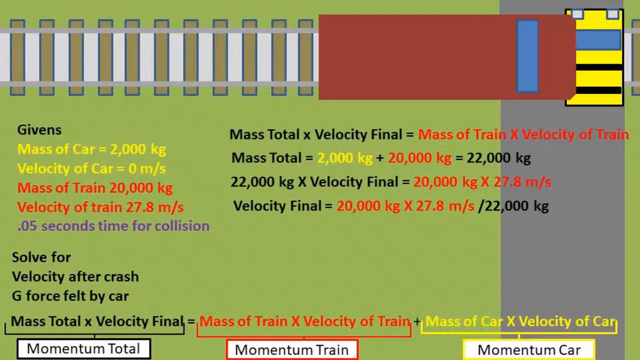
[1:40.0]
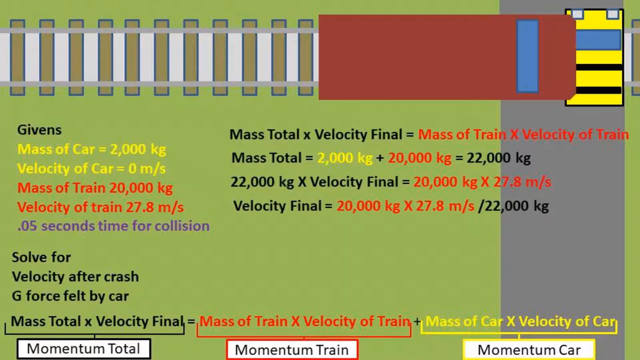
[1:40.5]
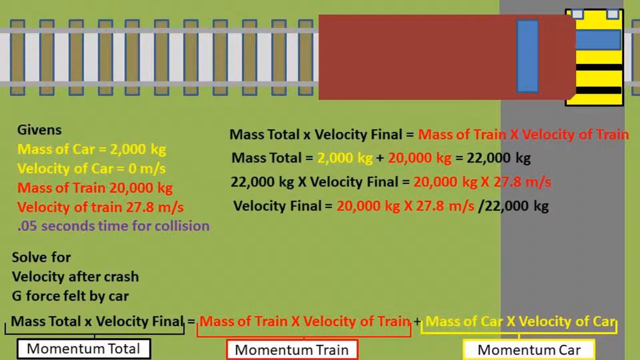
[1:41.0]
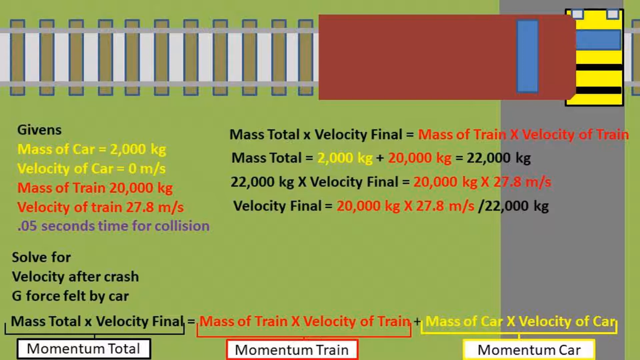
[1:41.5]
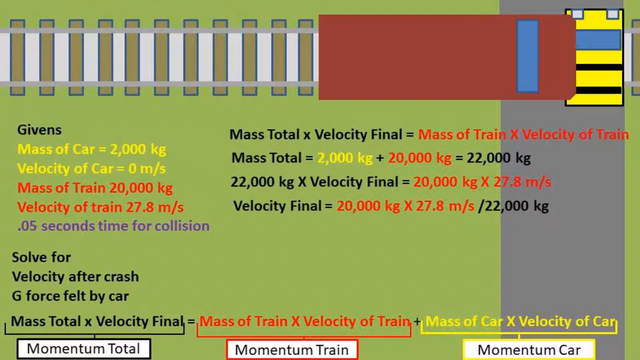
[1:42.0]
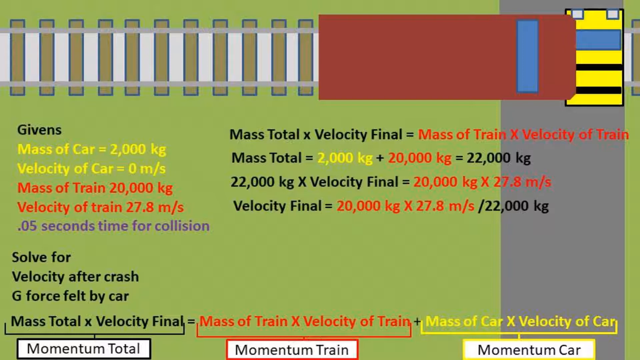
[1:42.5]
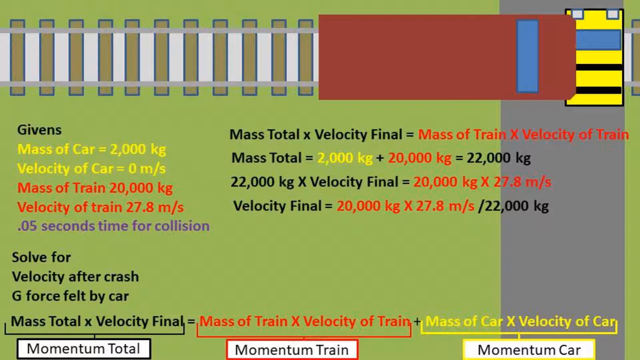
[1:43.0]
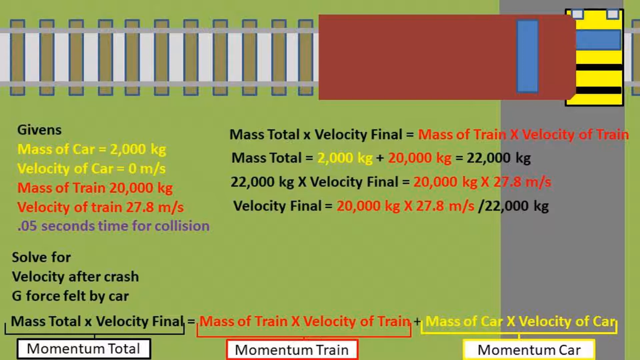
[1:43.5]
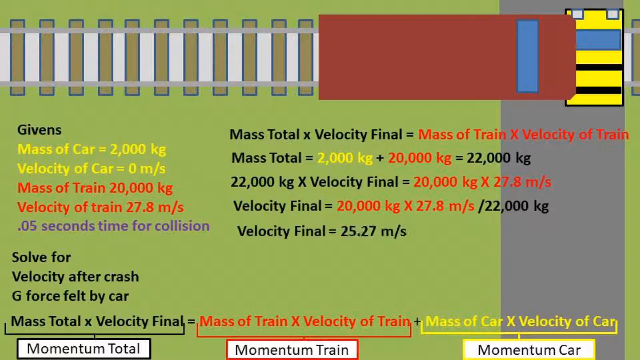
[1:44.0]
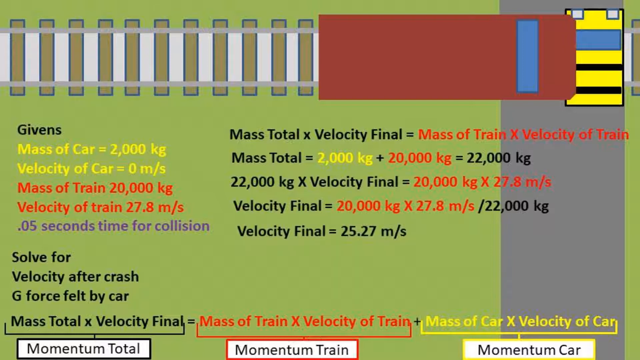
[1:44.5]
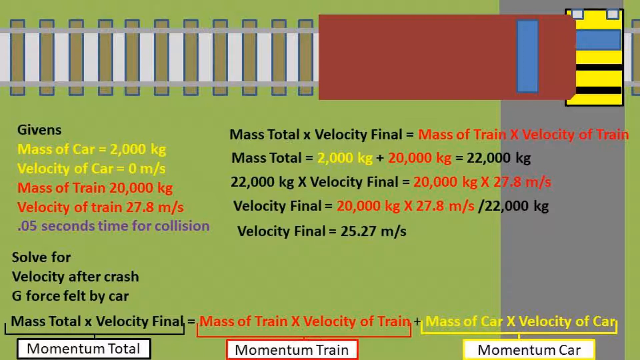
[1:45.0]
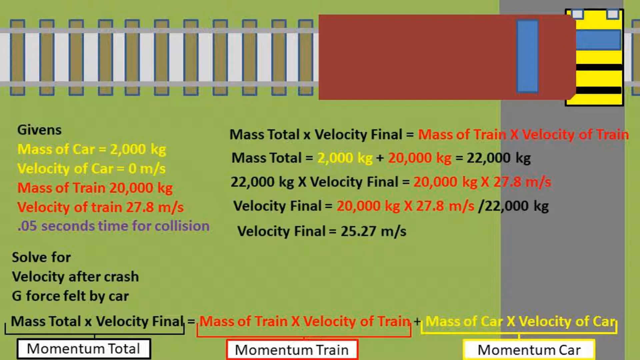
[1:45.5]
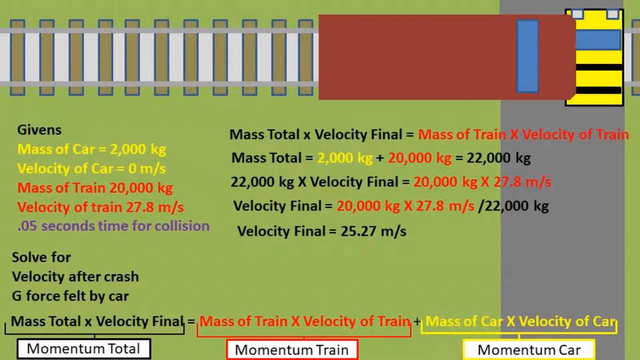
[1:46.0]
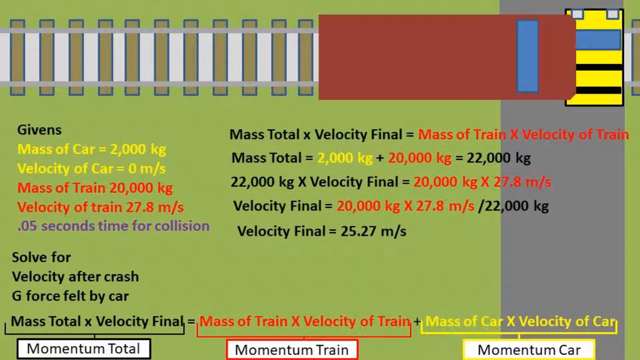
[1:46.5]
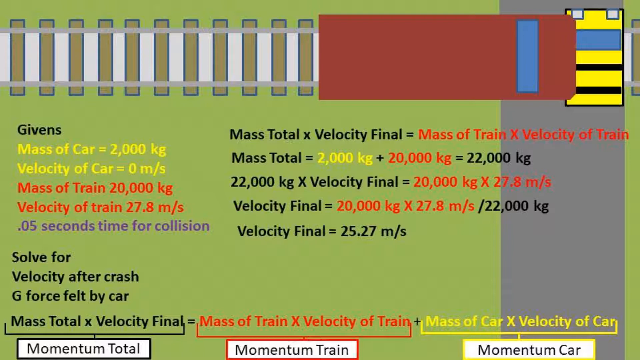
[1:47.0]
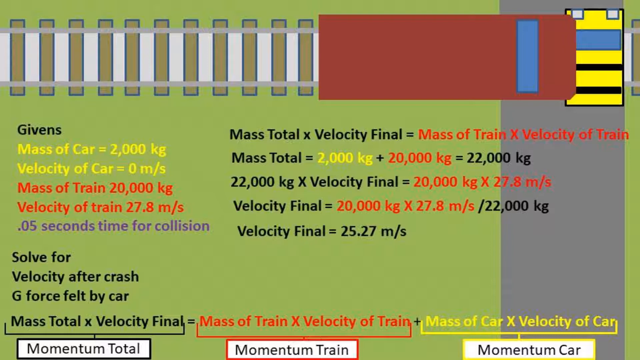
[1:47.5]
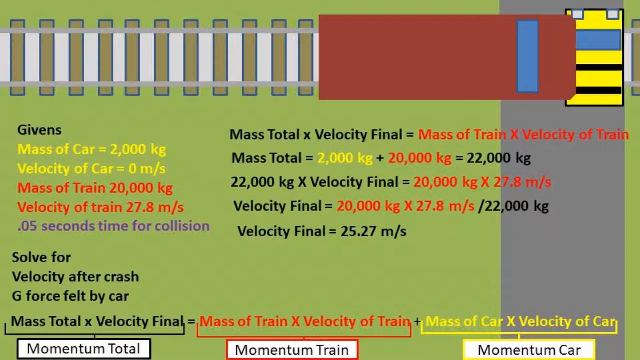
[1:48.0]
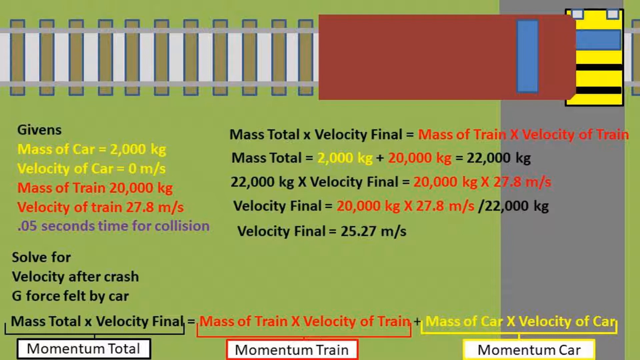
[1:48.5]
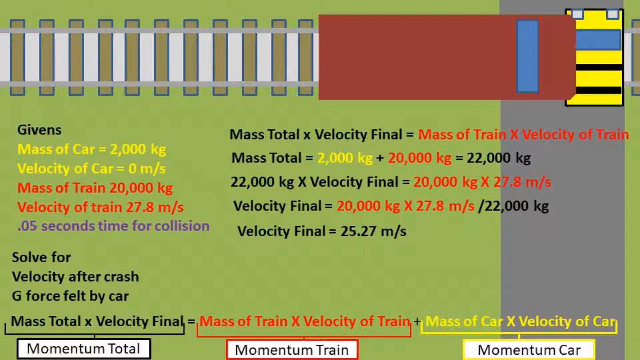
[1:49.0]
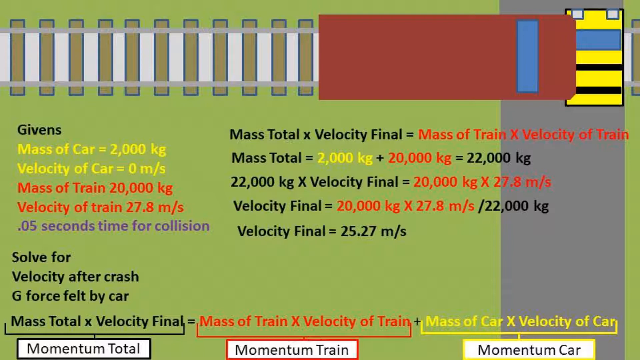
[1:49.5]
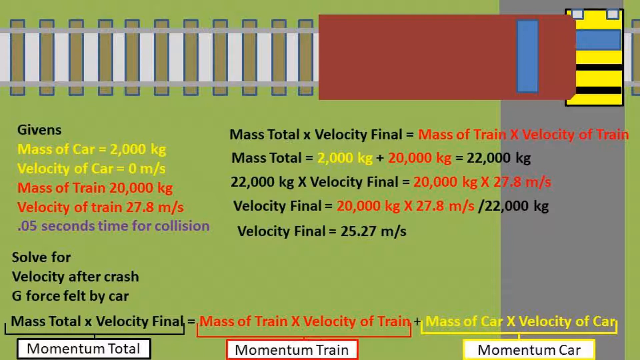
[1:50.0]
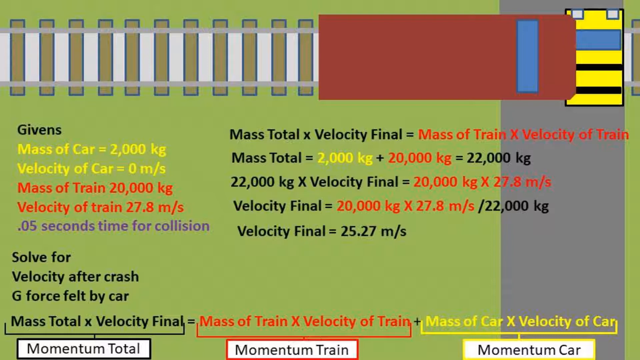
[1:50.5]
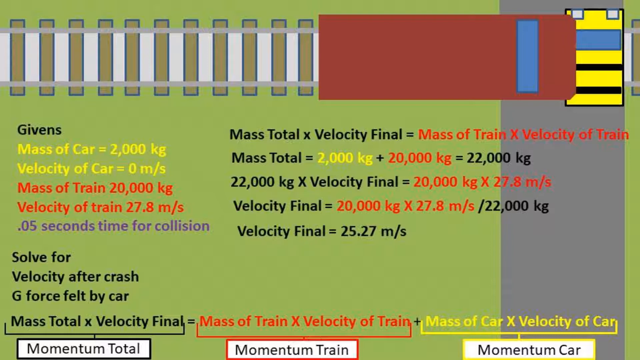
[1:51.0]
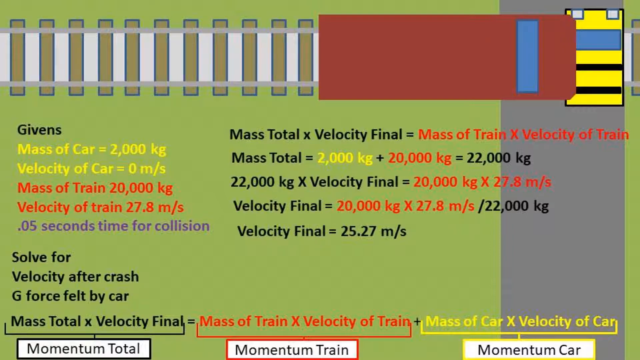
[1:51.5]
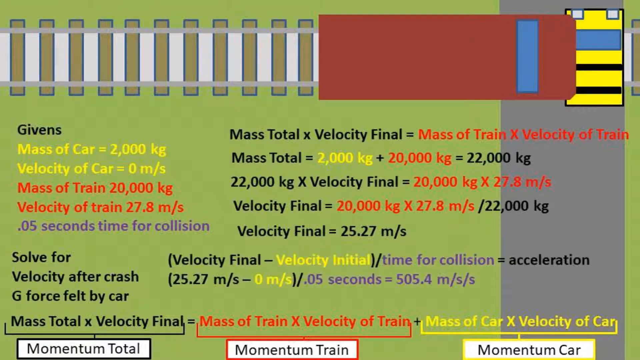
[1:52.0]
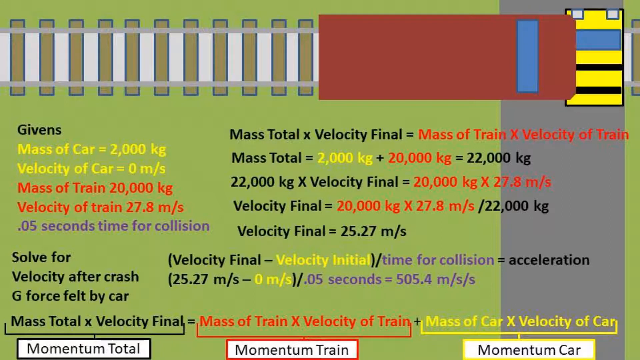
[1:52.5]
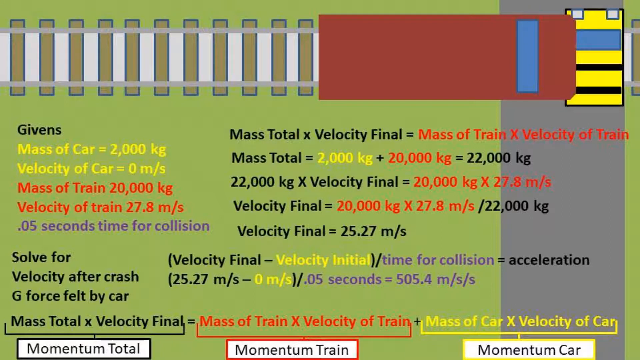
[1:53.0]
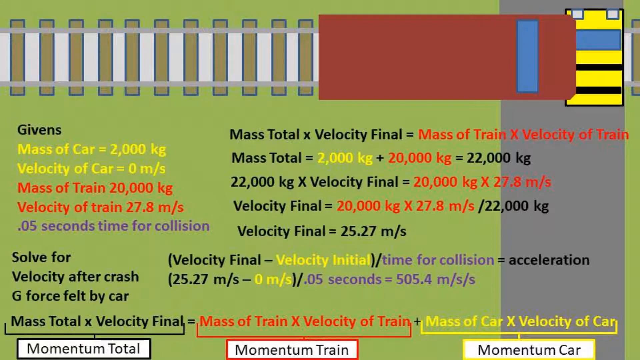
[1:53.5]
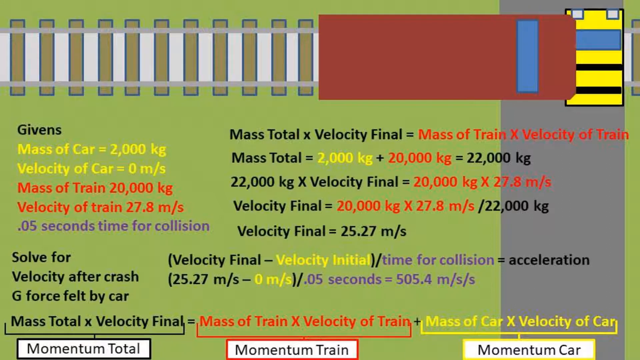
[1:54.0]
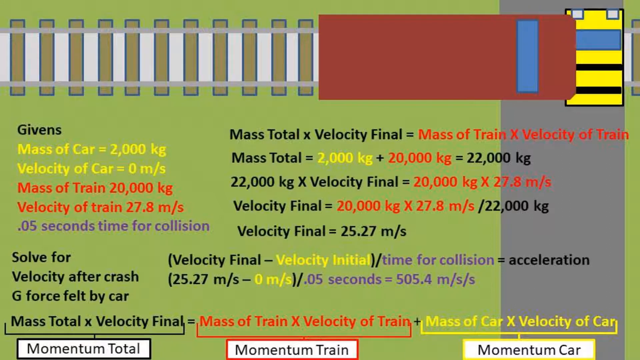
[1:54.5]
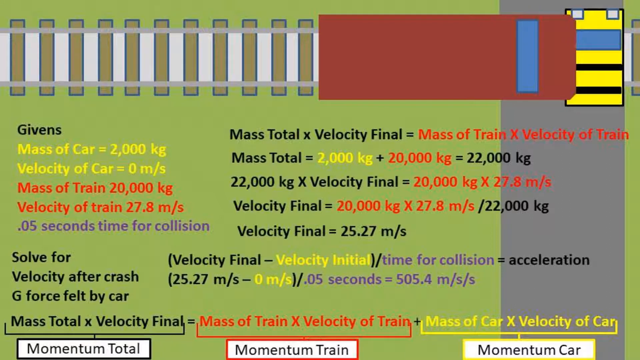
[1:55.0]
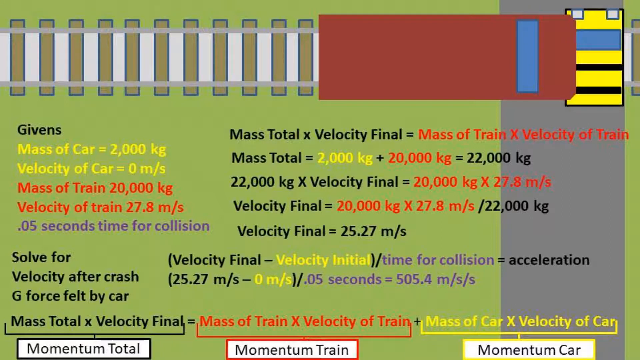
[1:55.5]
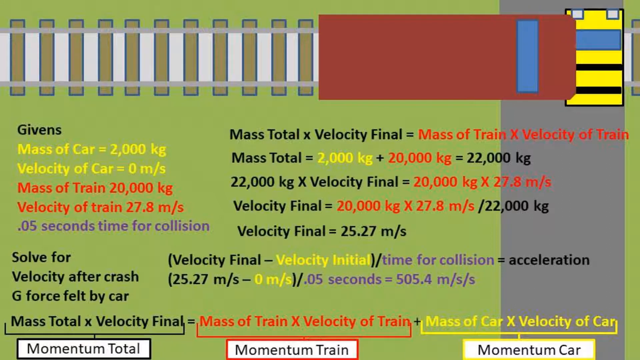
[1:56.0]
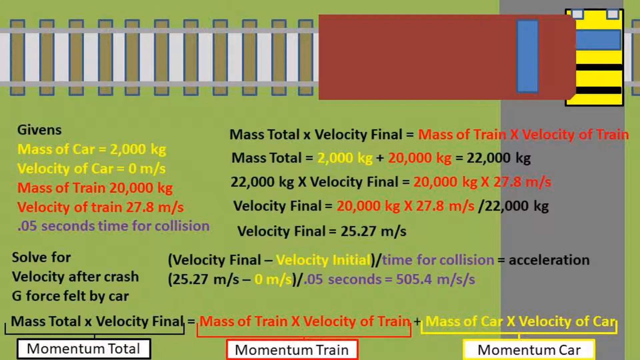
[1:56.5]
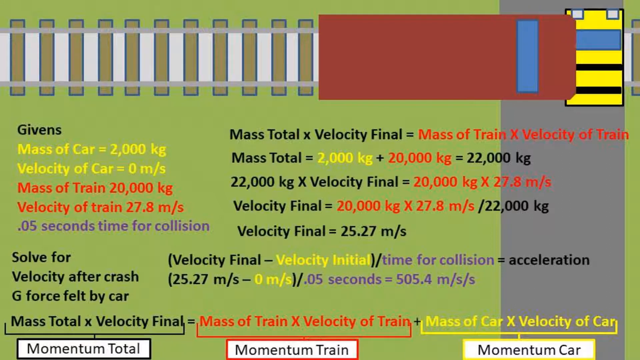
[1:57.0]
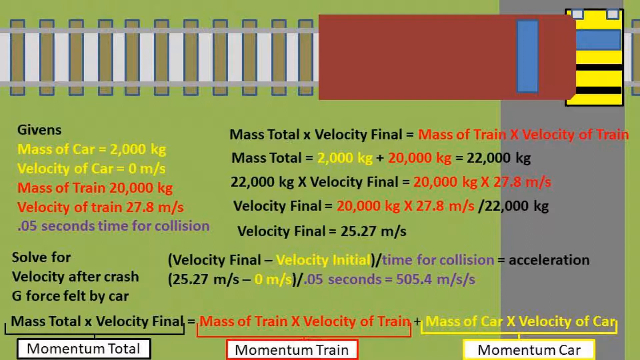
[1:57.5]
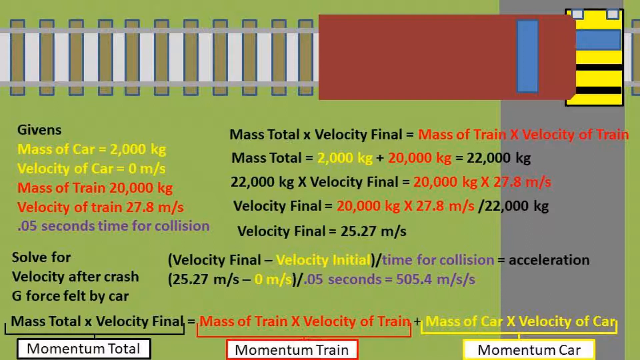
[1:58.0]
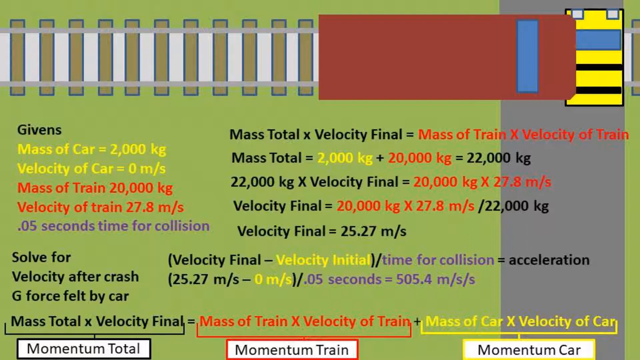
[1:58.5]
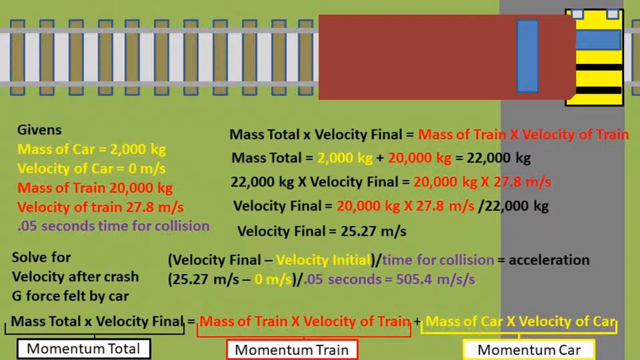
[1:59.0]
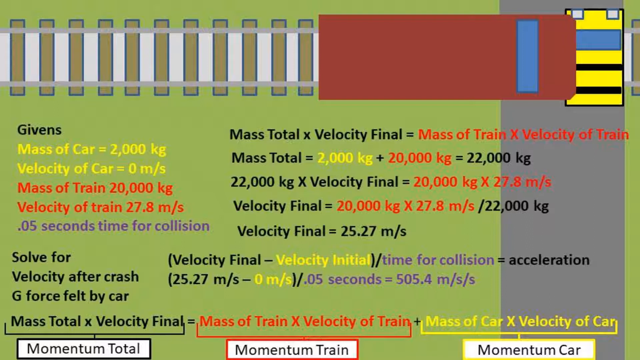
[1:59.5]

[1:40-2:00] A simple diagram shows a train that has hit a car that had been stopped on the rails. The givens include the mass of the car, the velocity of the car, the mass of the train, and the velocity of the train, and the problem asks for the velocity after the crash and the g-force, with a formula for total momentum. Some of the work is already done: the total mass has been calculated, and the formula for the final velocity is shown. The final velocity is then calculated and appears on screen as text, and the acceleration formula is added. The colour scheme stays the same; the mass of the car and other car details are always in yellow, both in the givens and in the formula.